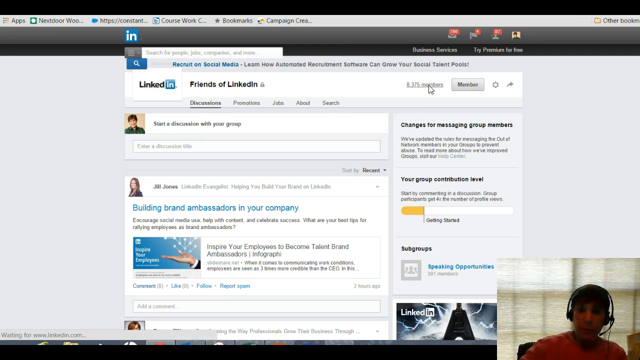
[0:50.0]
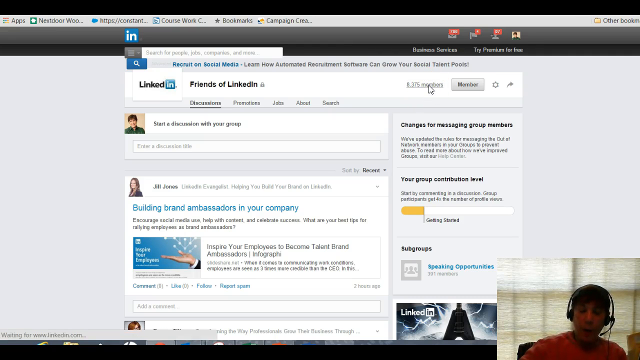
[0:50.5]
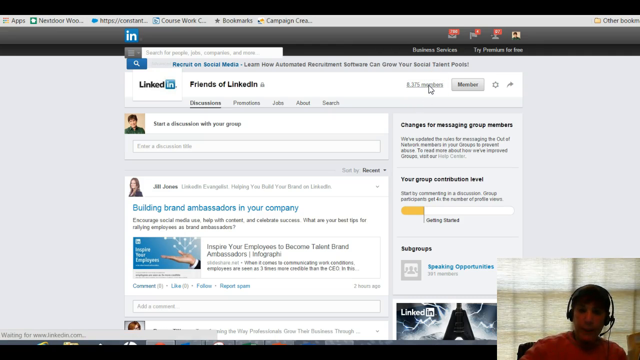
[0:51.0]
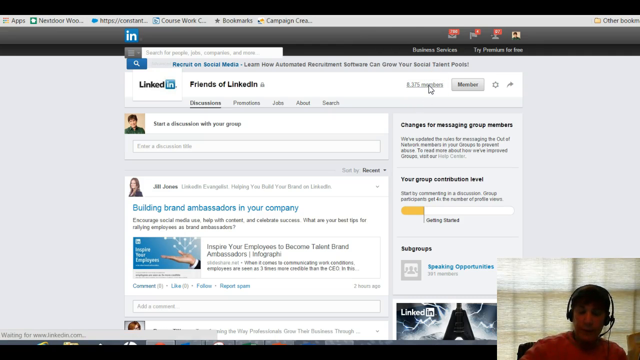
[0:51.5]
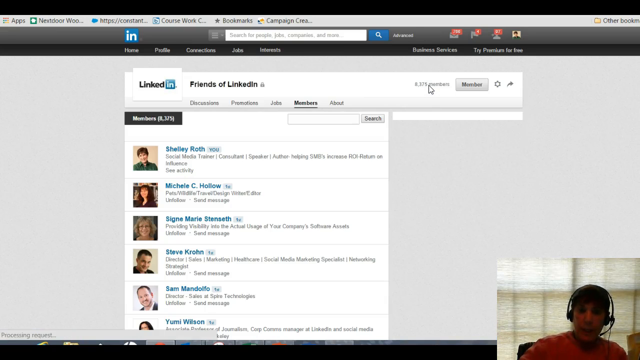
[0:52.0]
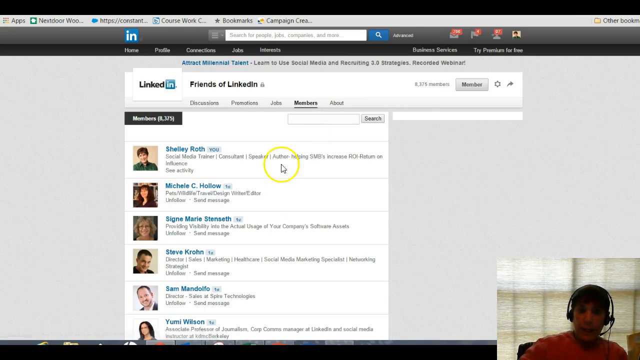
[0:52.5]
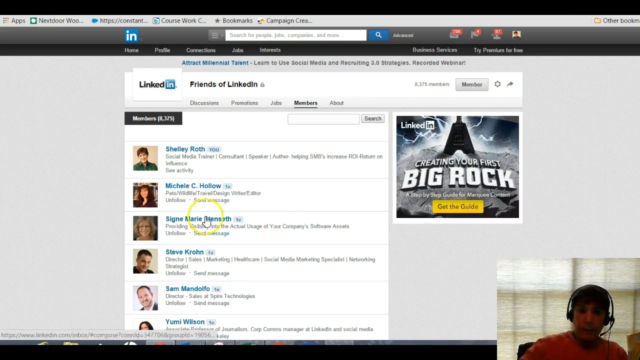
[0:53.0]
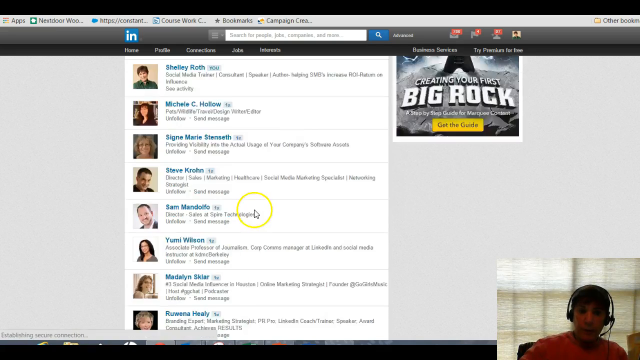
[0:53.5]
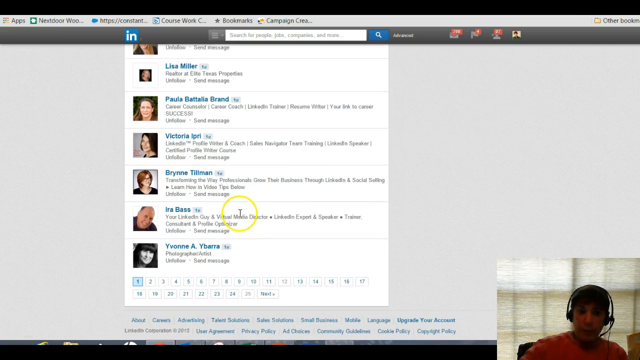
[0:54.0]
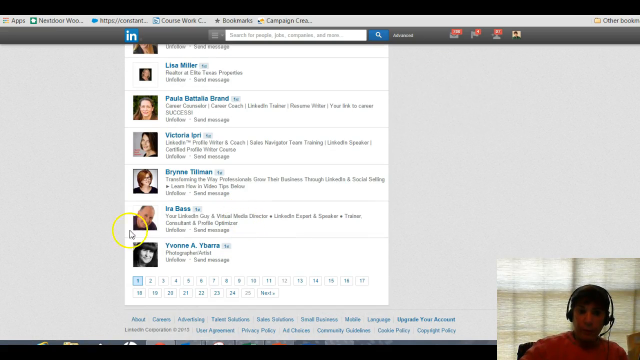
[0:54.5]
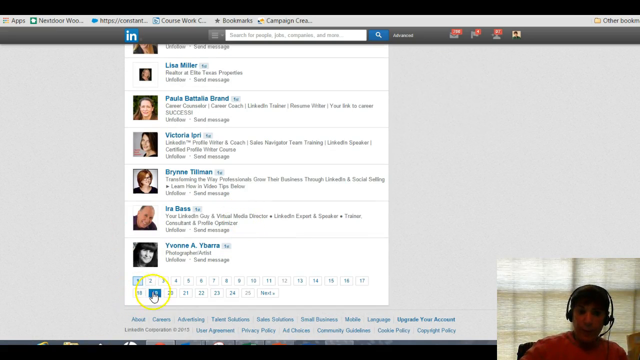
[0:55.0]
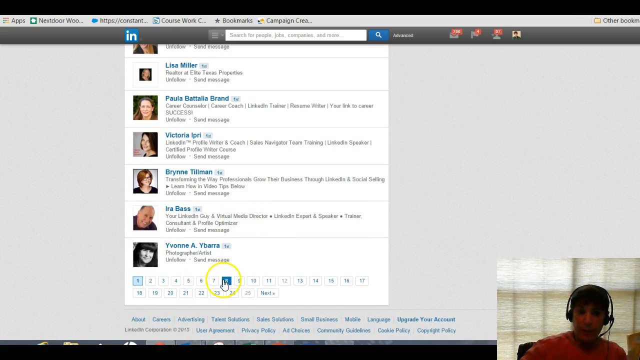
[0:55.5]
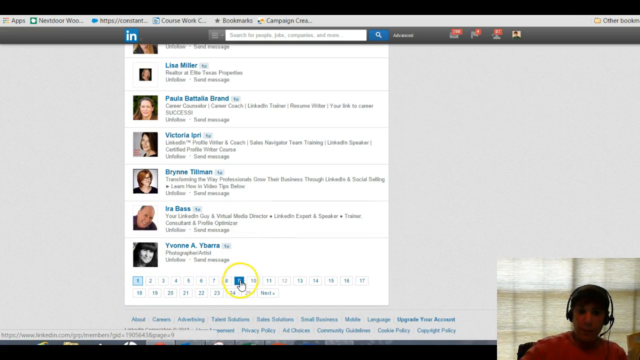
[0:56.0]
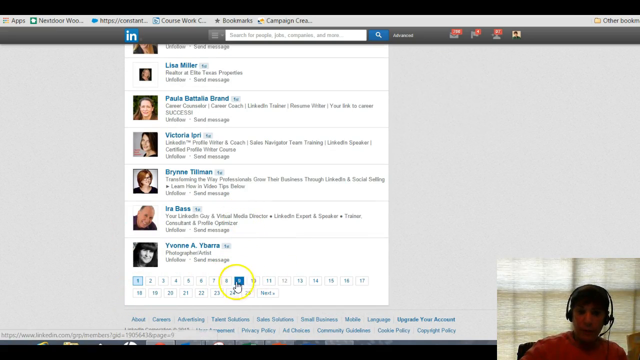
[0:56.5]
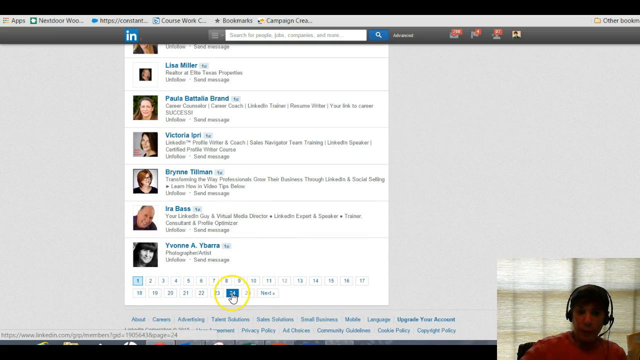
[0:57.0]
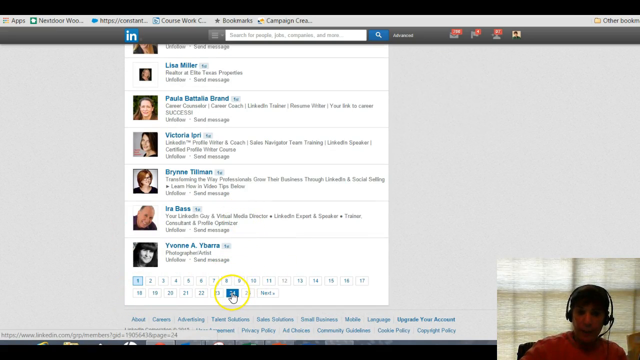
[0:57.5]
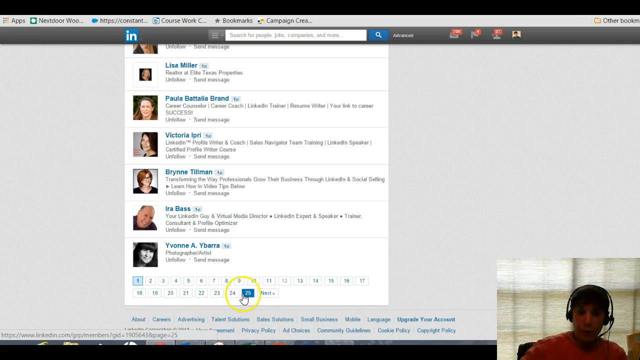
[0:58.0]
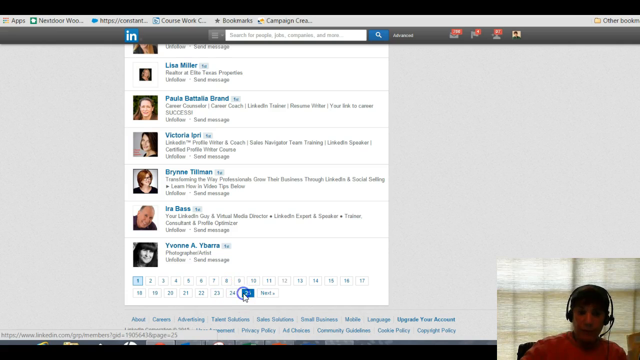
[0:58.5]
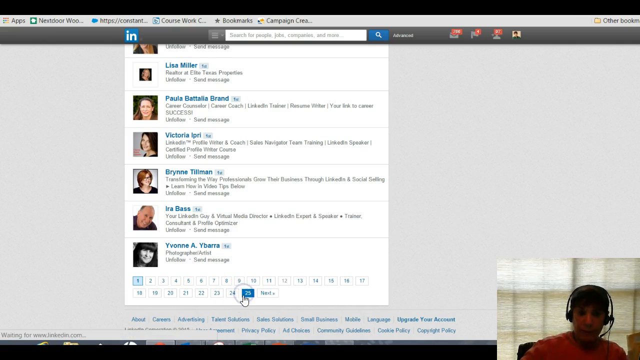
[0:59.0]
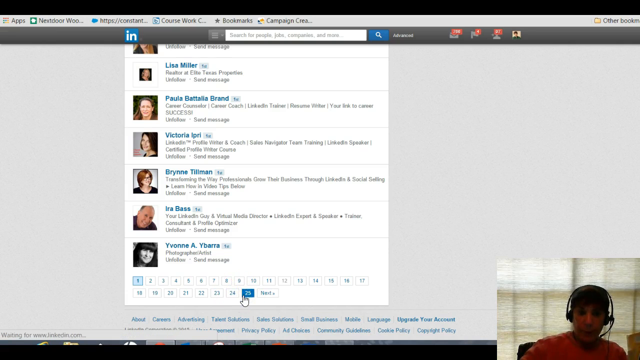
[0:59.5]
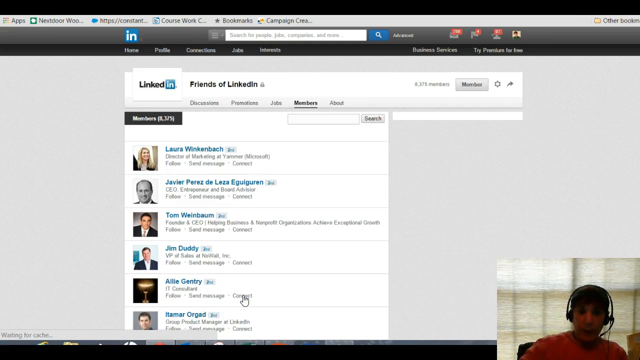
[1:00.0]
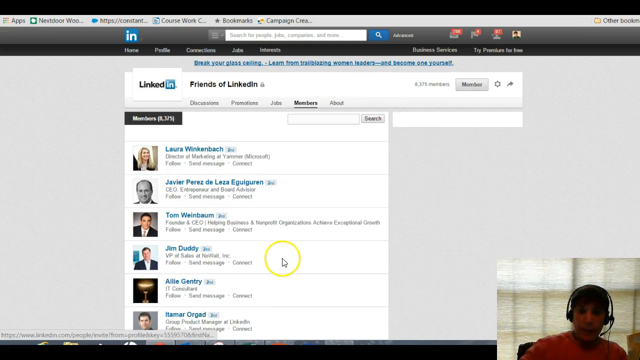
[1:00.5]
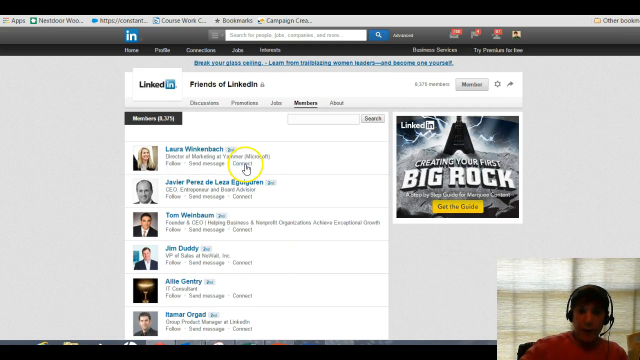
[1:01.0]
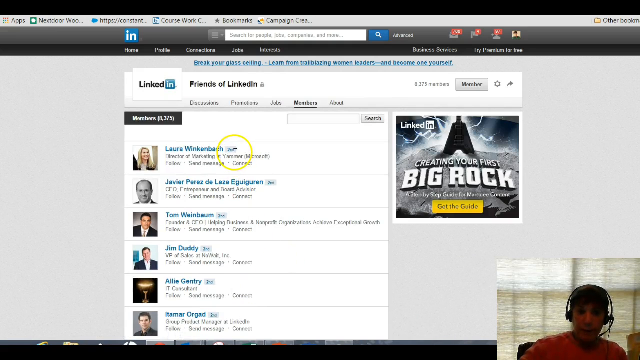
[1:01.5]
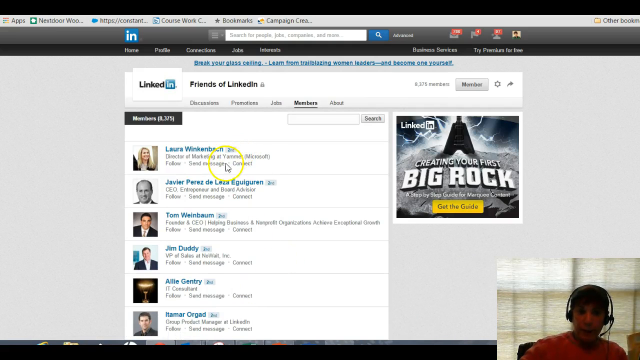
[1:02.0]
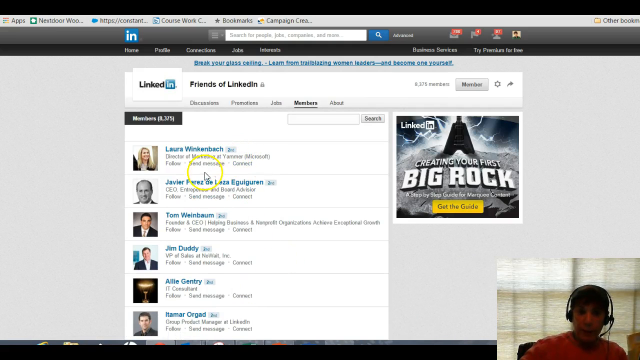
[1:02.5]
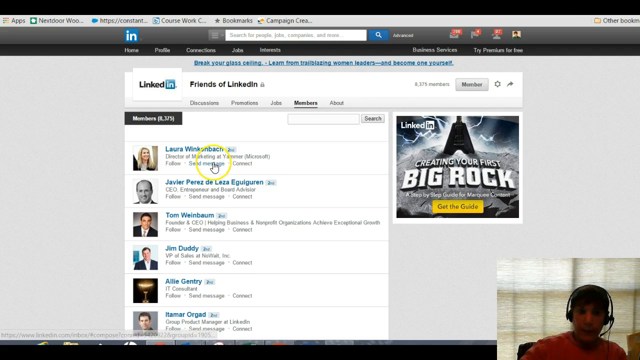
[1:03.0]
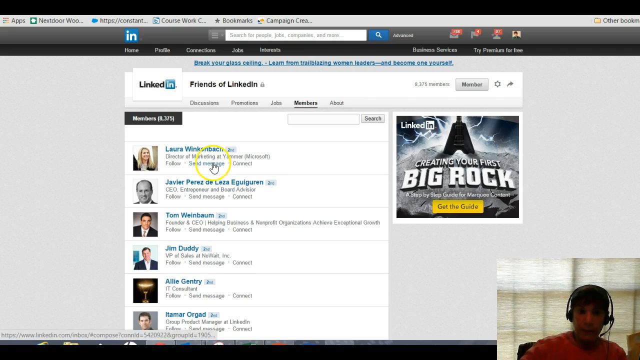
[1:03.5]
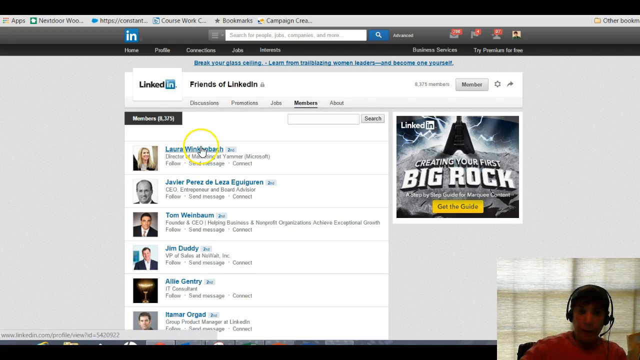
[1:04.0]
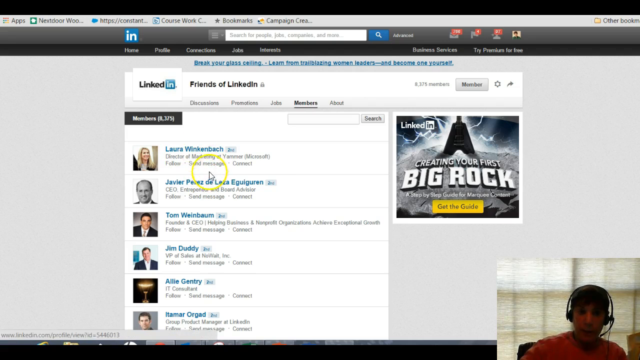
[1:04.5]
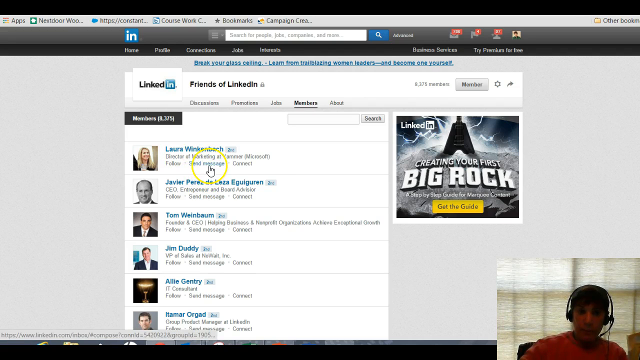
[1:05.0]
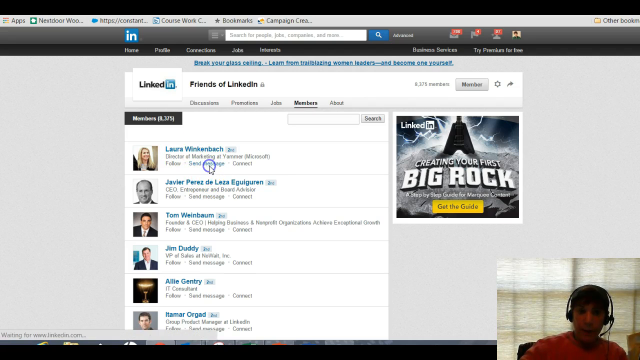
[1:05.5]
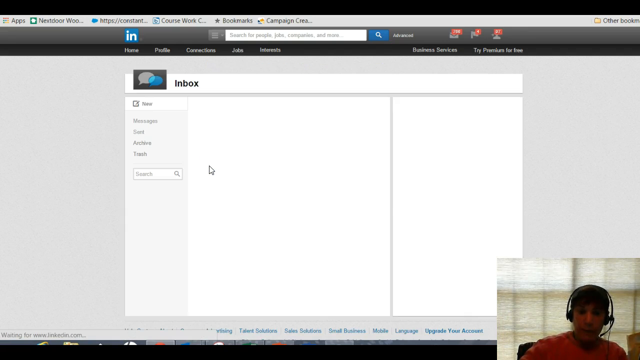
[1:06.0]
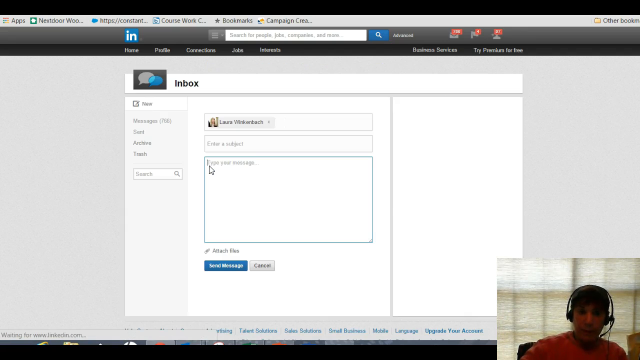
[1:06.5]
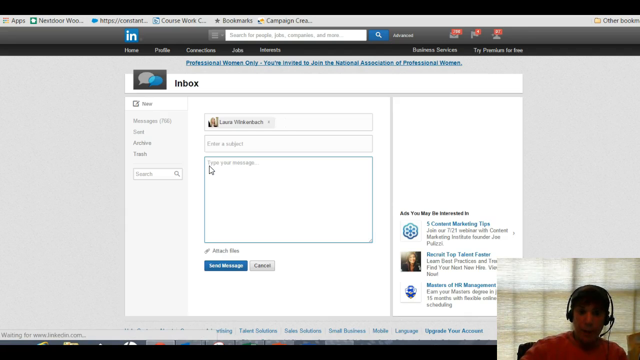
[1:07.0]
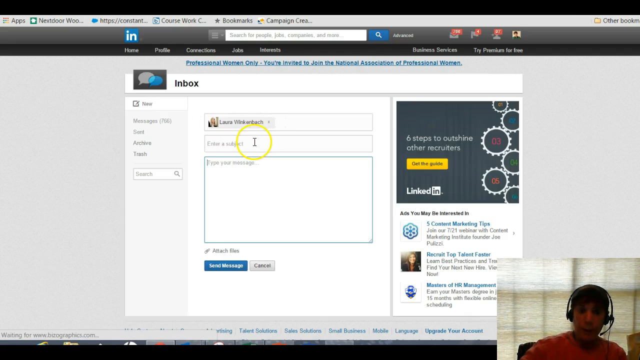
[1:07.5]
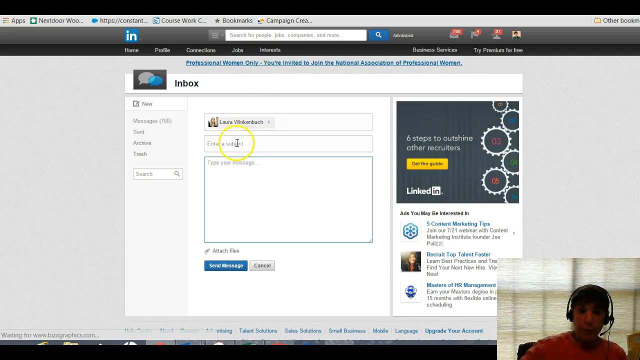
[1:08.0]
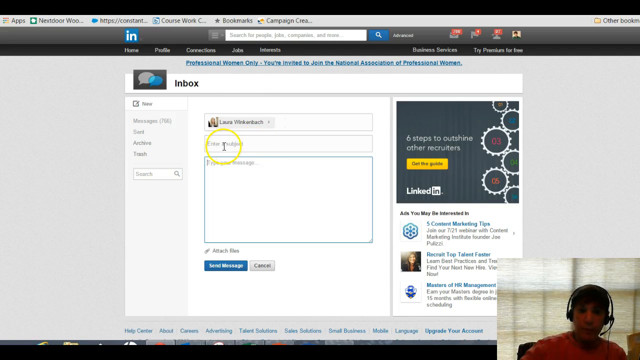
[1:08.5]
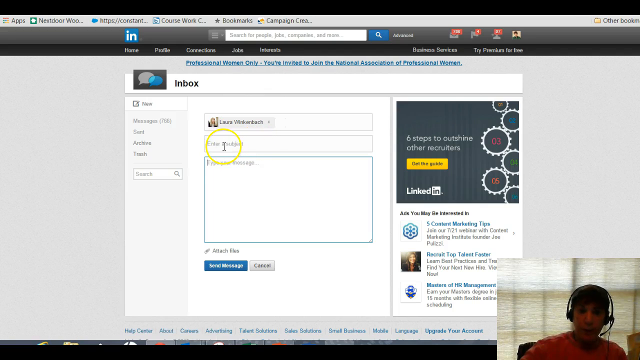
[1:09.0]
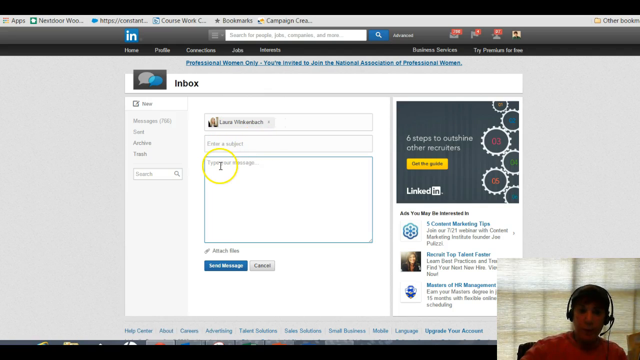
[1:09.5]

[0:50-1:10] Someone records their screen on some kind of LinkedIn web page, with a webcam in the bottom right corner showing their face. They wear an orange shirt and black headphones with a microphone attached. They mouse over a number reading "8,375 members" and click on it, opening a new page with "Friends of LinkedIn" at the top. It lists member profiles in a column, the top one being Shelly Roth. The user scrolls down through multiple profiles to the bottom of the page, which shows additional pages of profiles. They mouse over several of the page numbers and eventually click on number 25, which shows new profiles, the top one being Laura Winkenbach. They click "Send Message" on this profile, which takes them to their LinkedIn inbox.